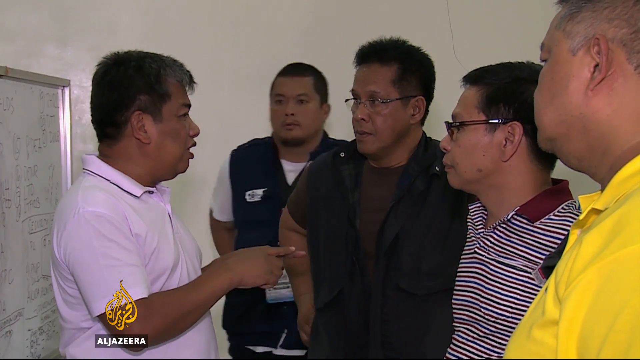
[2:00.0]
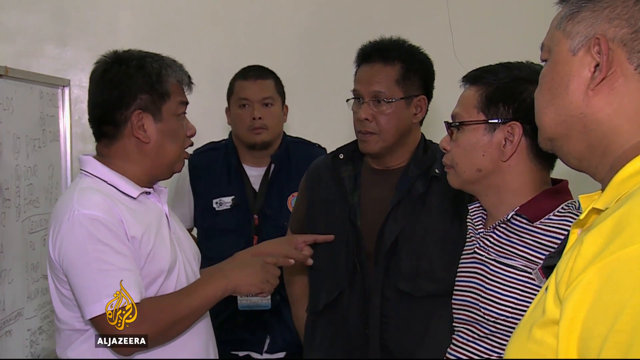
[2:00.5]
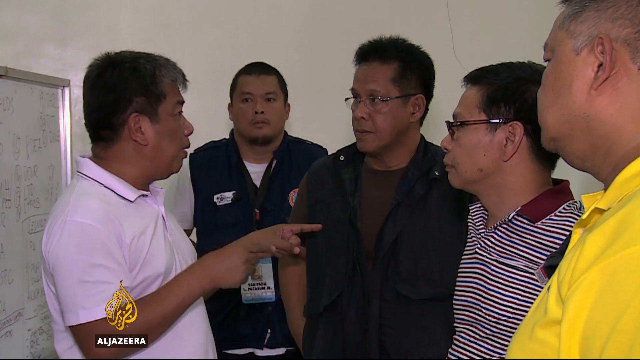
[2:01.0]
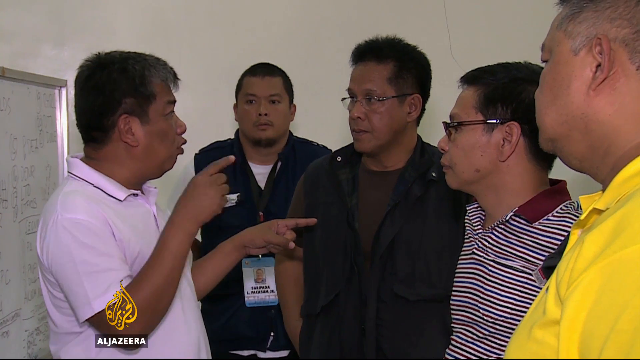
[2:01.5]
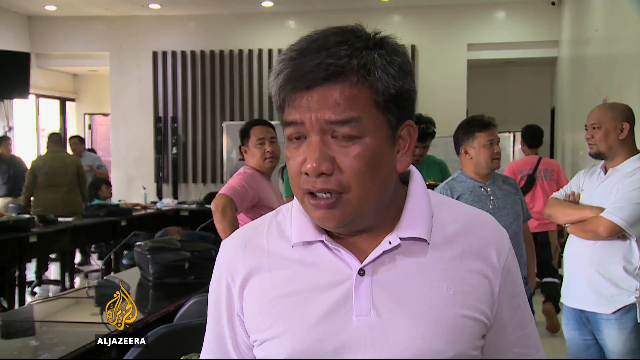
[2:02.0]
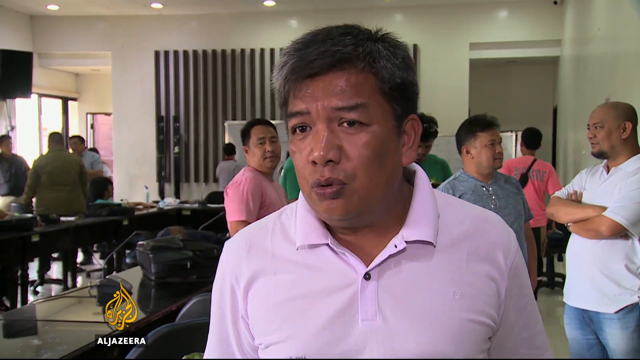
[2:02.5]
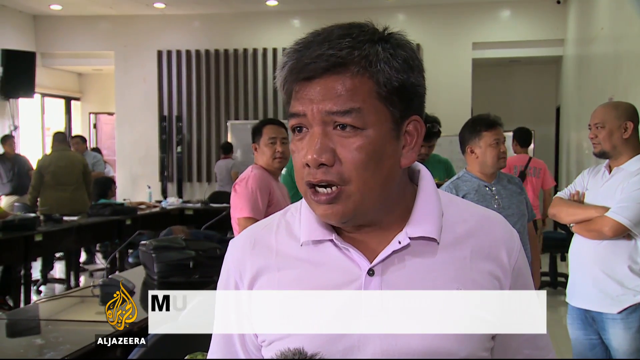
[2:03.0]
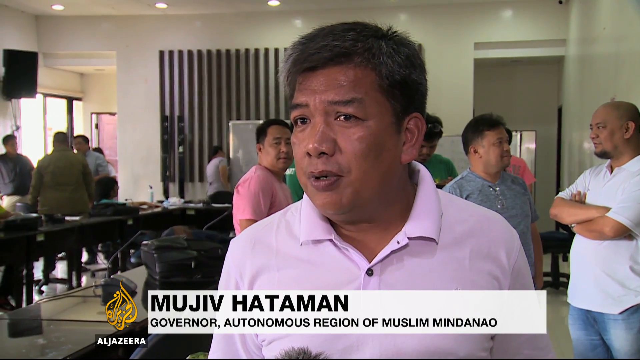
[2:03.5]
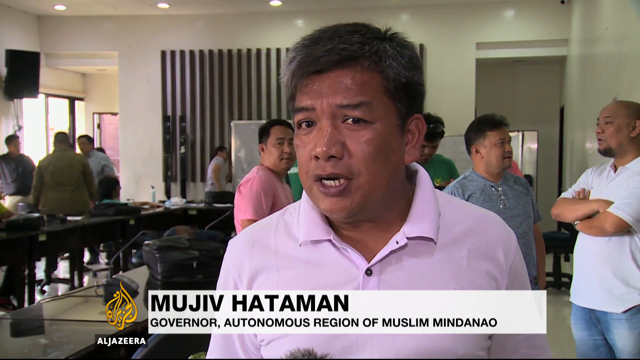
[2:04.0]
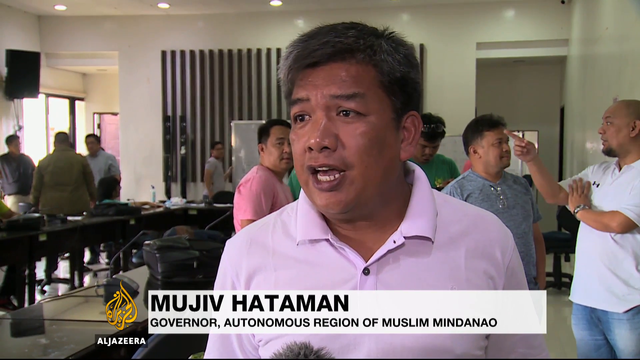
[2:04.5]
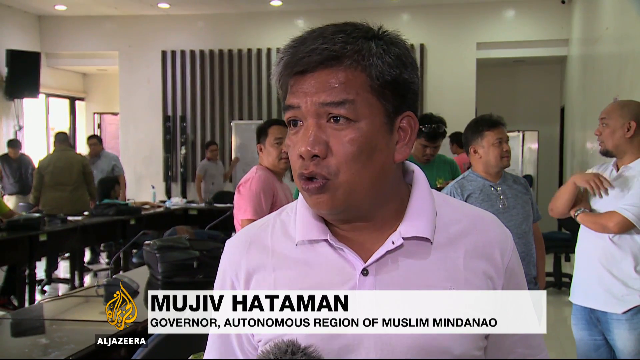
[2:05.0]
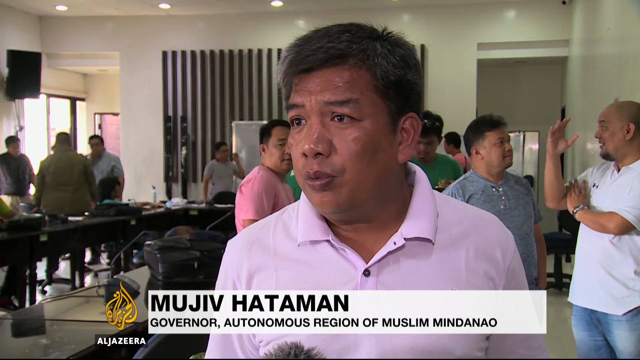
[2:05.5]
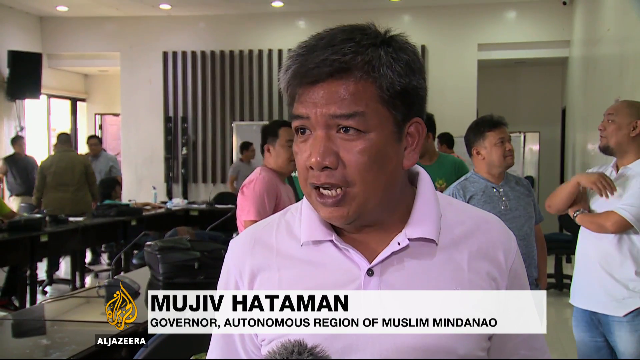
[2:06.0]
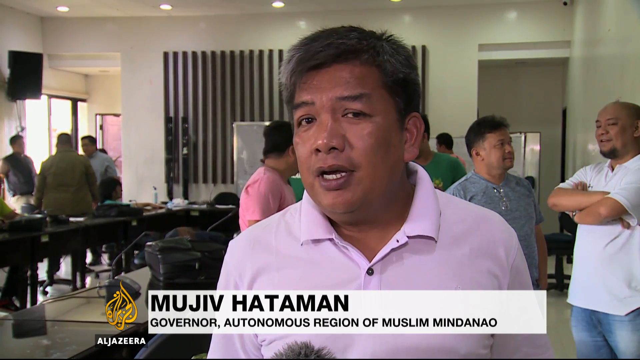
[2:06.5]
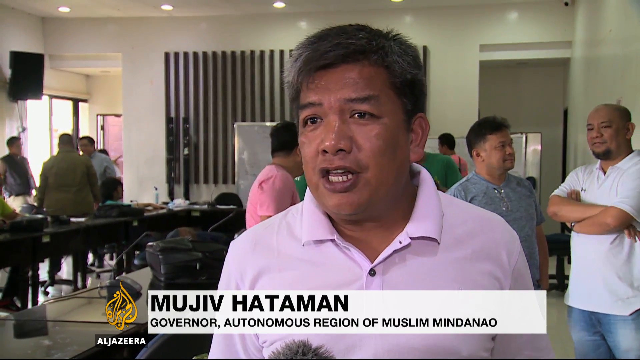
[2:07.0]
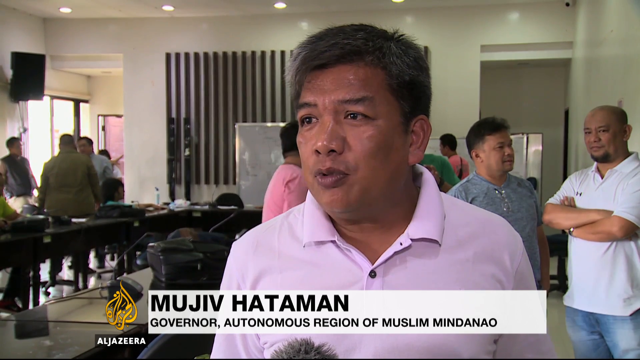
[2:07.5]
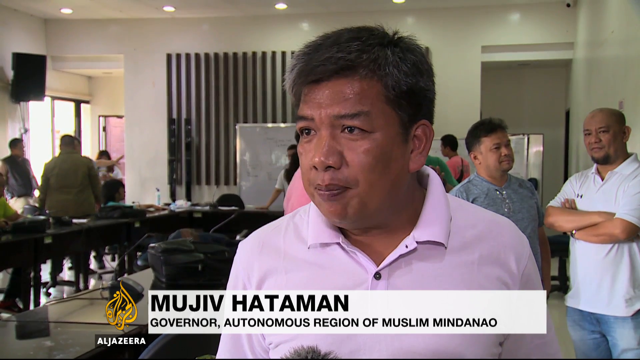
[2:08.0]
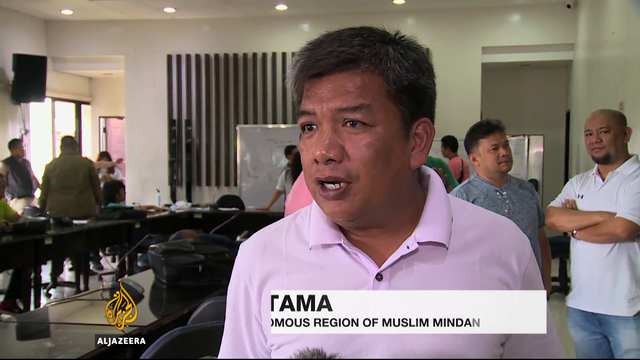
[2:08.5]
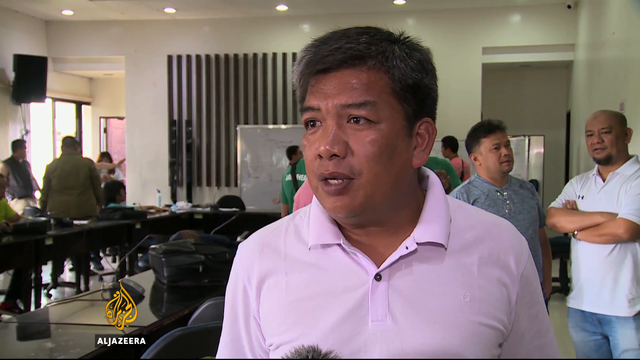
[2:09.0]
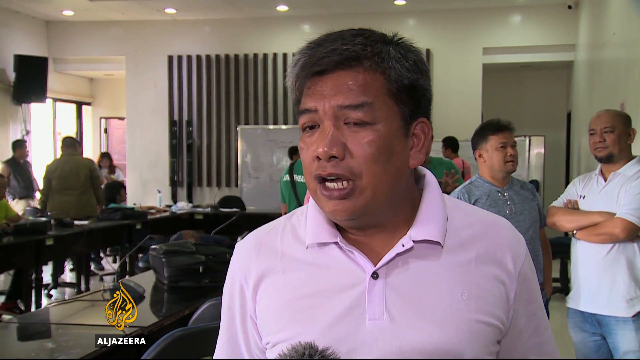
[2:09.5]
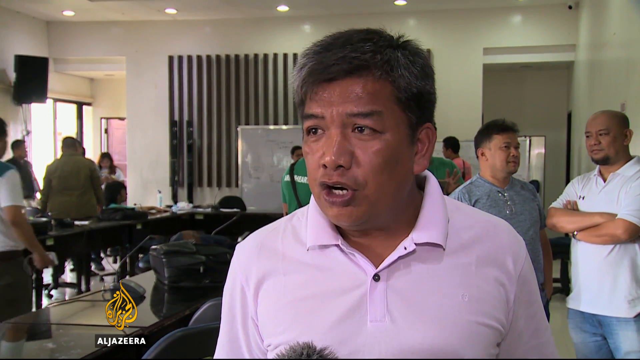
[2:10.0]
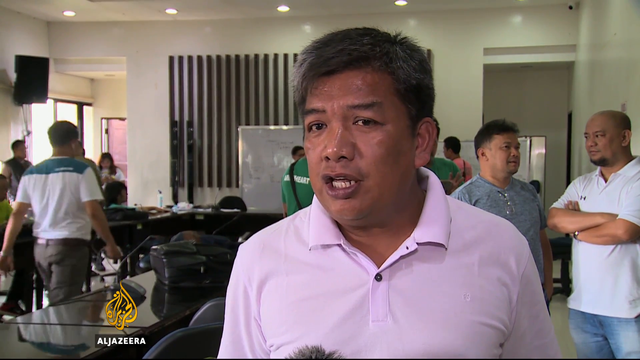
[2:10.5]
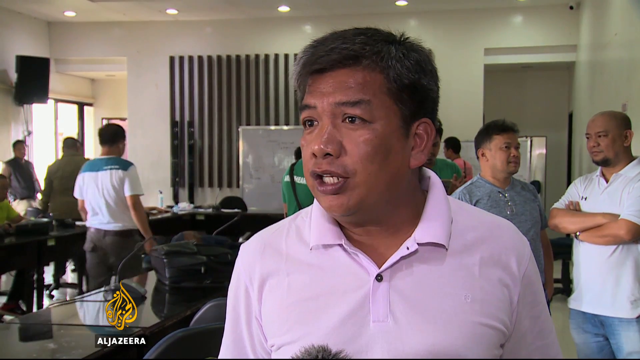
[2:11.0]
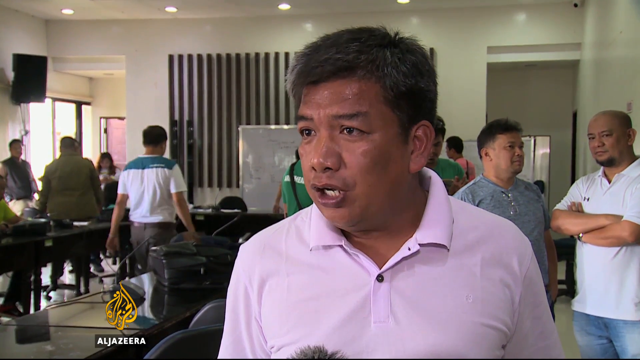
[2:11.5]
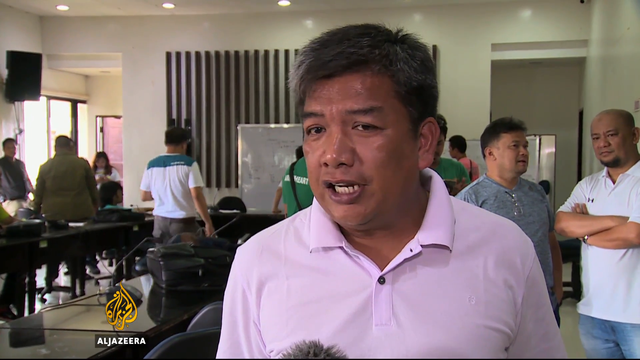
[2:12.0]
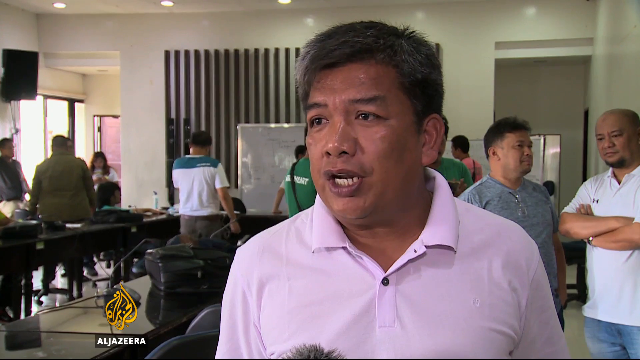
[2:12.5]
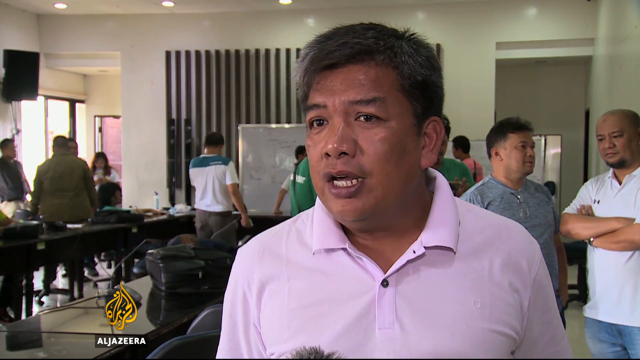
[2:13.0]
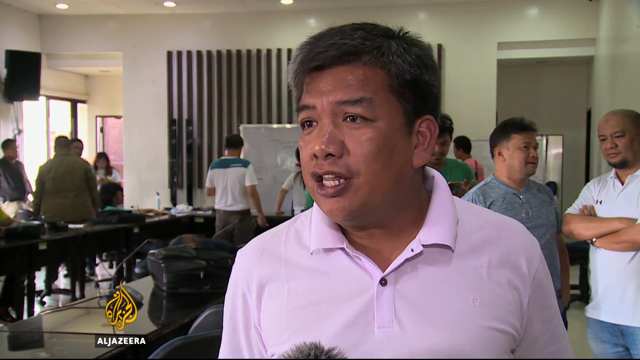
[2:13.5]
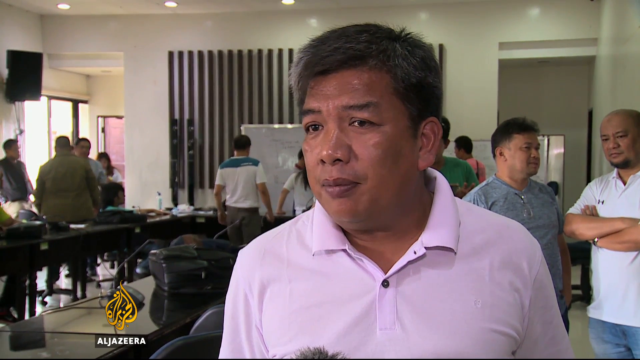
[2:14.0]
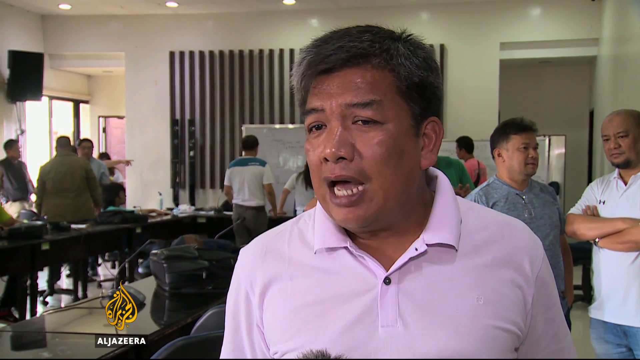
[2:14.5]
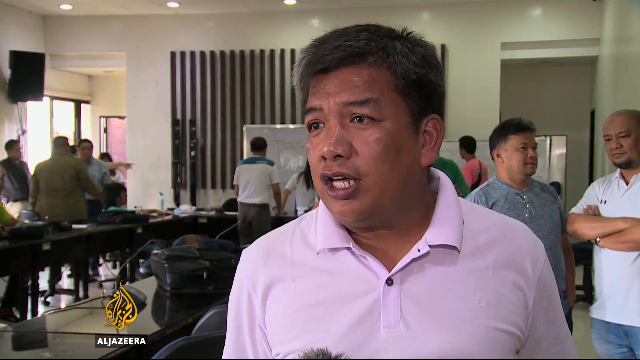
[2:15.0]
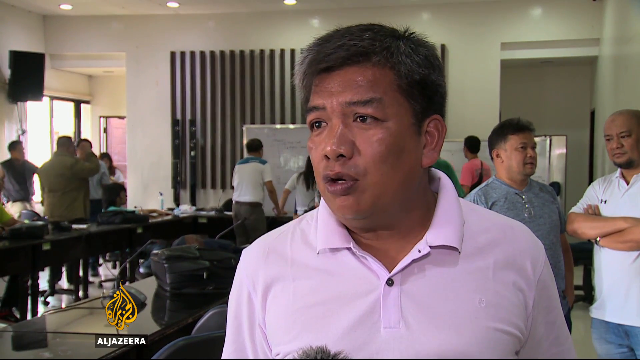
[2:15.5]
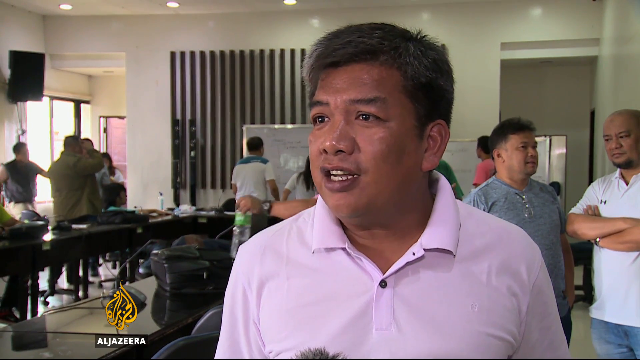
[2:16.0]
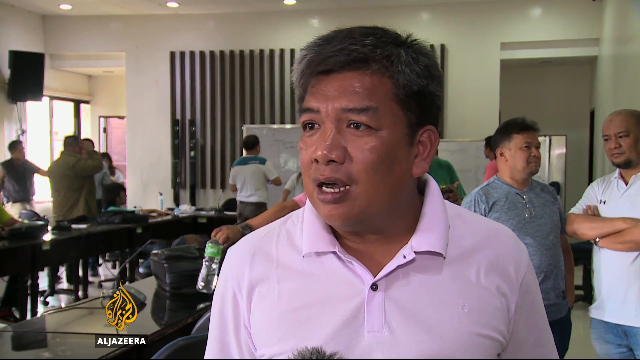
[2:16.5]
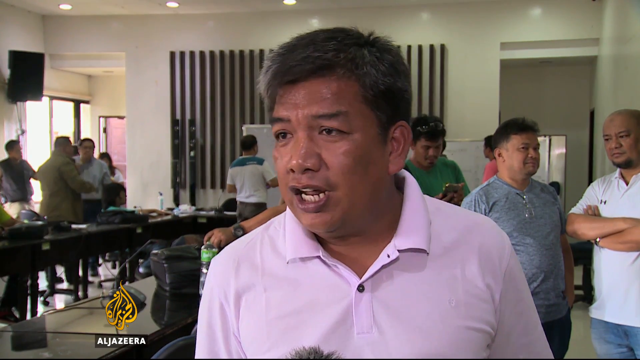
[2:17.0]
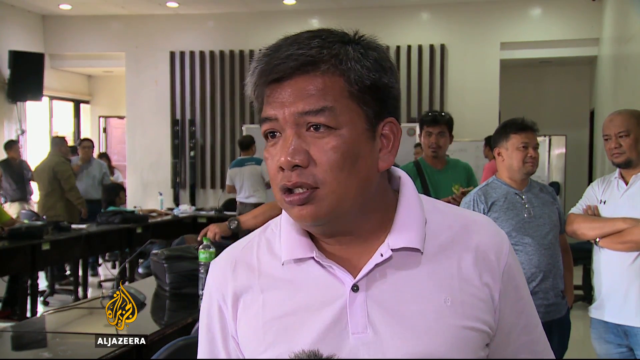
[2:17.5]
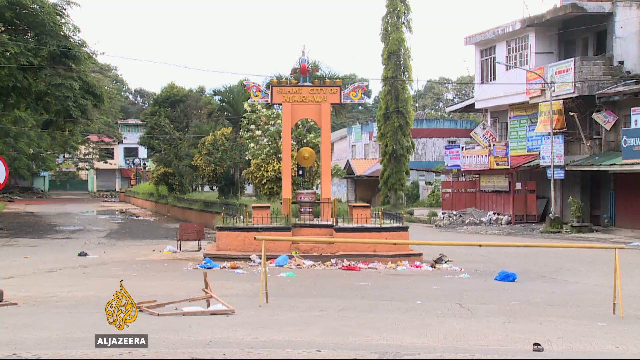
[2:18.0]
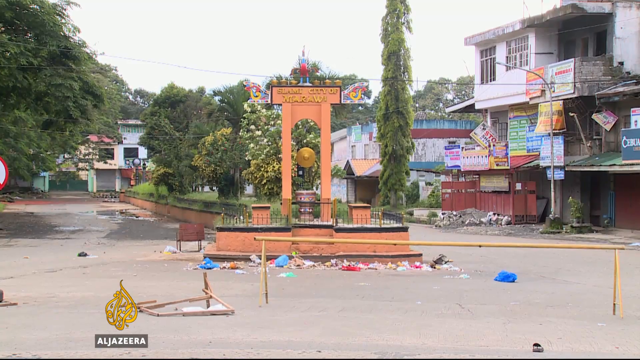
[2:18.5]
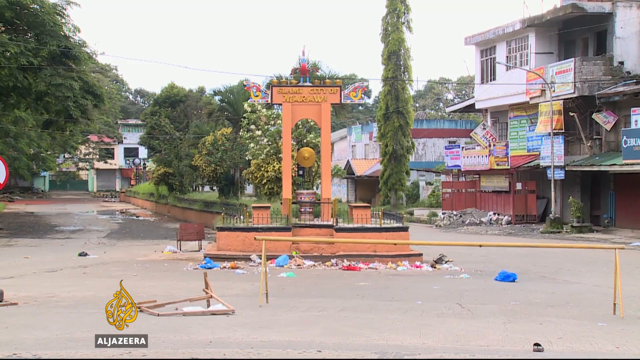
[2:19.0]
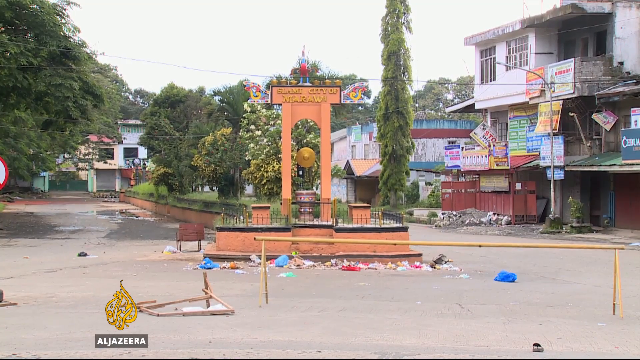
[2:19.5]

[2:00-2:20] The same group of men is shown. A caption identifies Mujib Hataman as the governor of the autonomous region of Muslim Mindanao. He speaks to the camera wearing a pink collared polo shirt, with a number of men standing behind him. Then an outside shot shows an abandoned place like a town square, possibly back in the abandoned city, though it is not clear where.